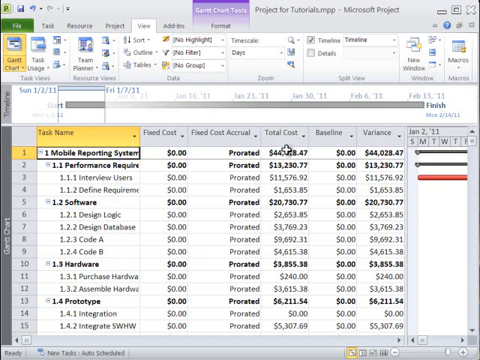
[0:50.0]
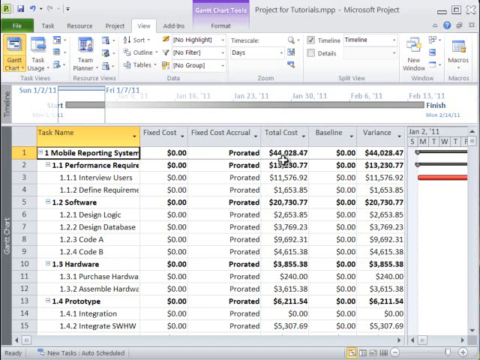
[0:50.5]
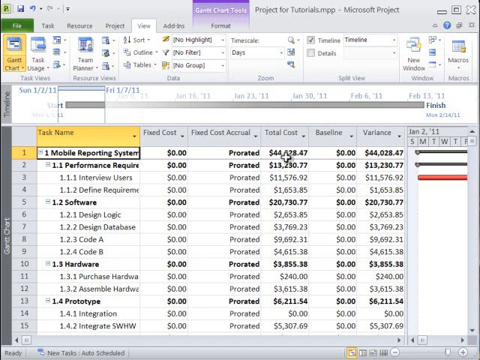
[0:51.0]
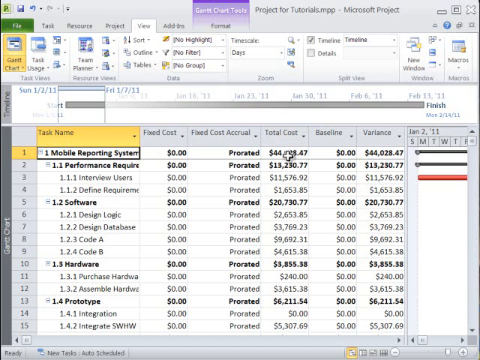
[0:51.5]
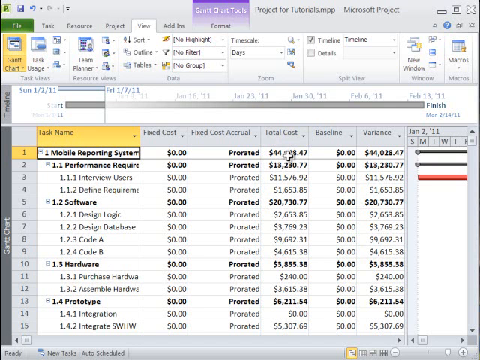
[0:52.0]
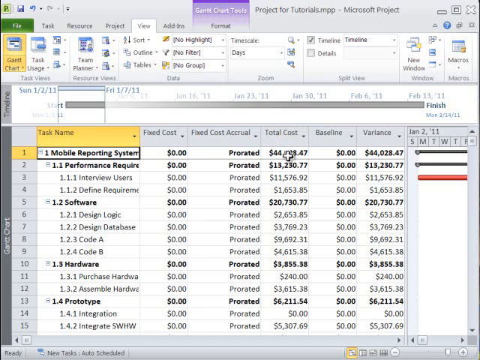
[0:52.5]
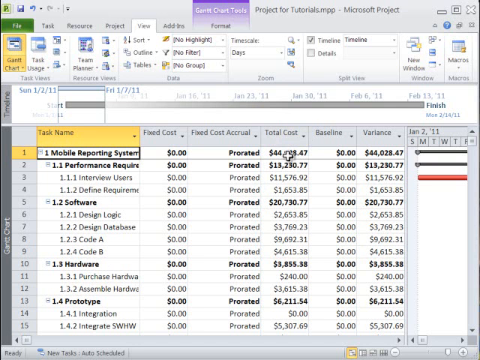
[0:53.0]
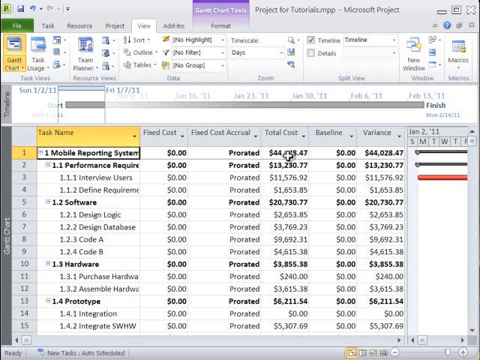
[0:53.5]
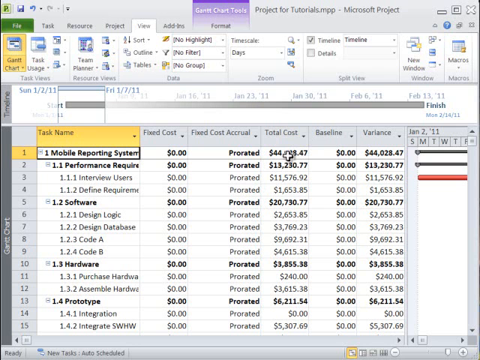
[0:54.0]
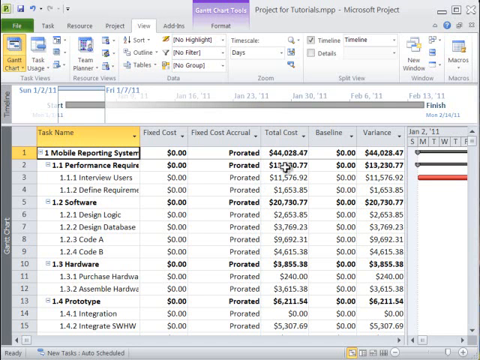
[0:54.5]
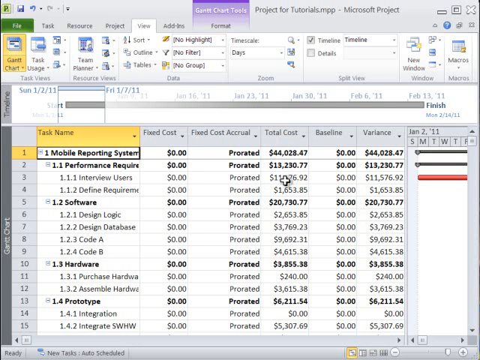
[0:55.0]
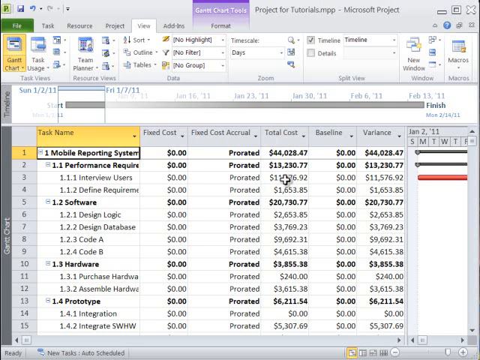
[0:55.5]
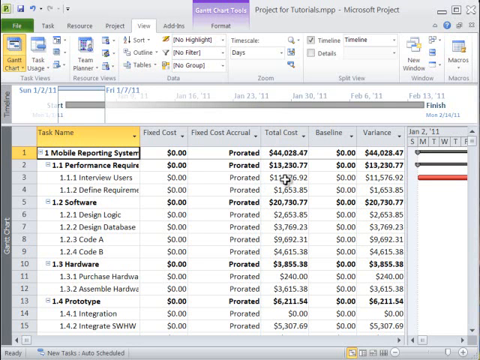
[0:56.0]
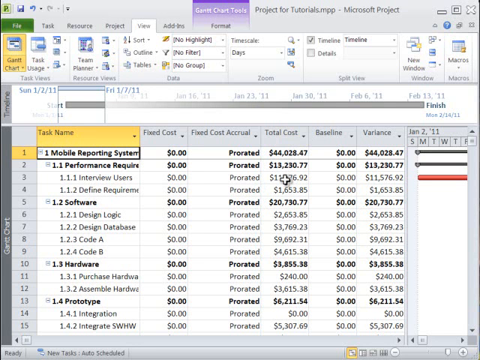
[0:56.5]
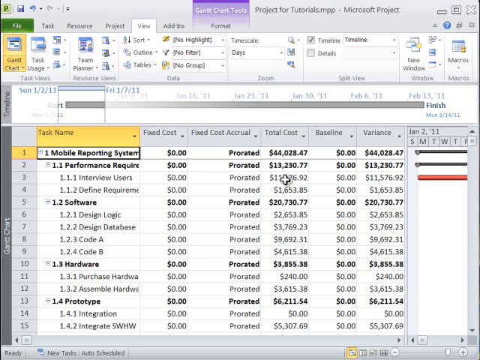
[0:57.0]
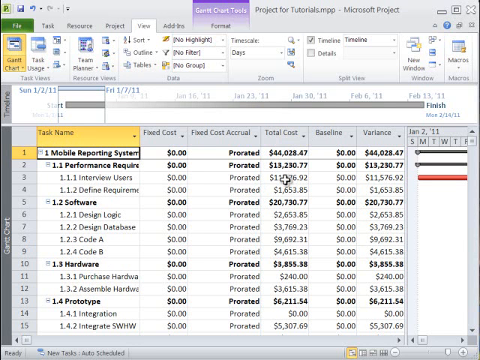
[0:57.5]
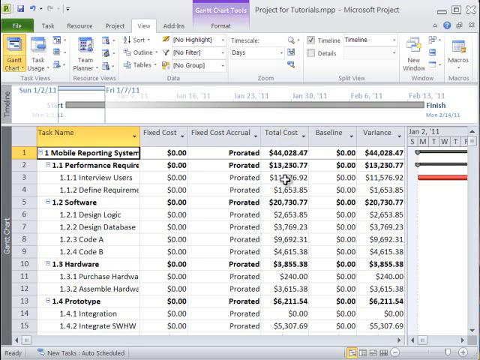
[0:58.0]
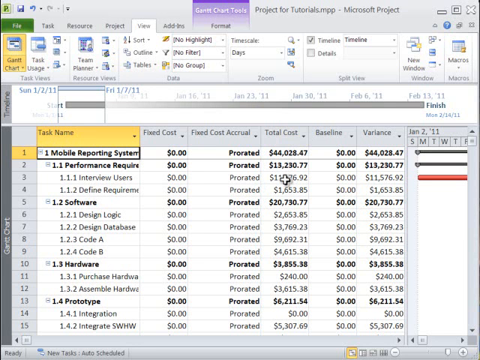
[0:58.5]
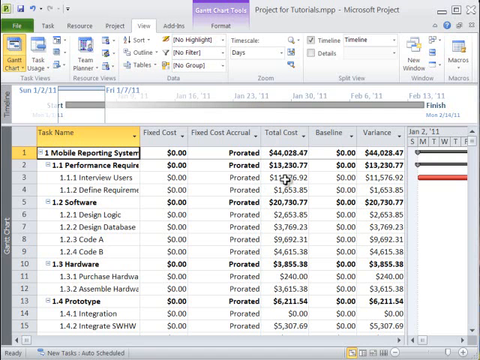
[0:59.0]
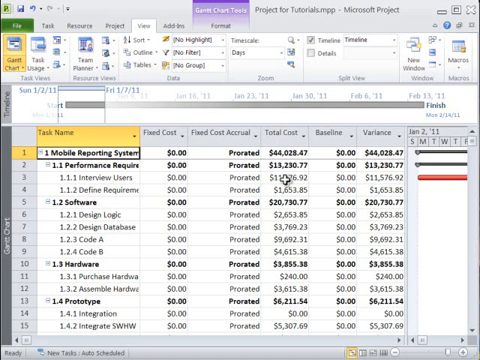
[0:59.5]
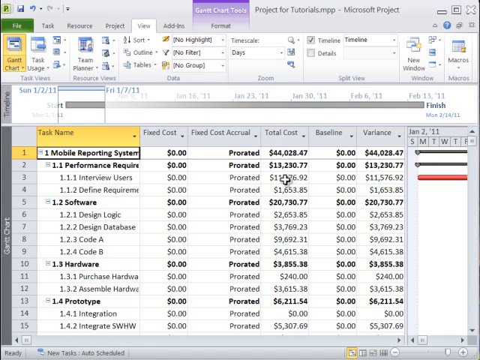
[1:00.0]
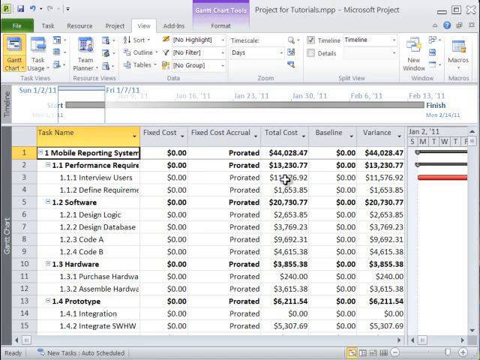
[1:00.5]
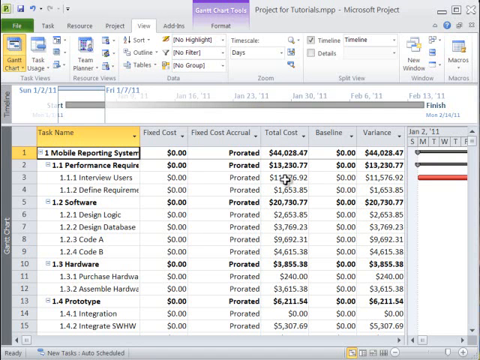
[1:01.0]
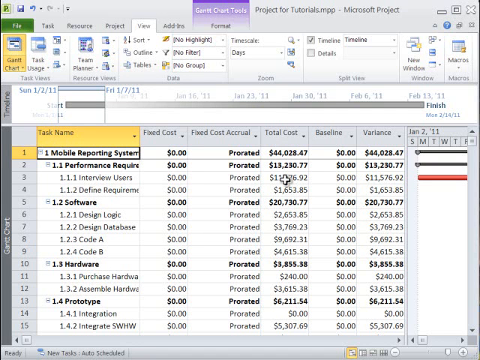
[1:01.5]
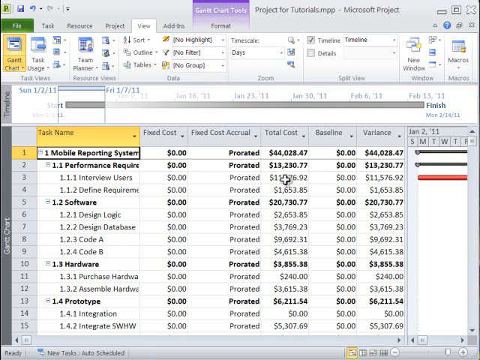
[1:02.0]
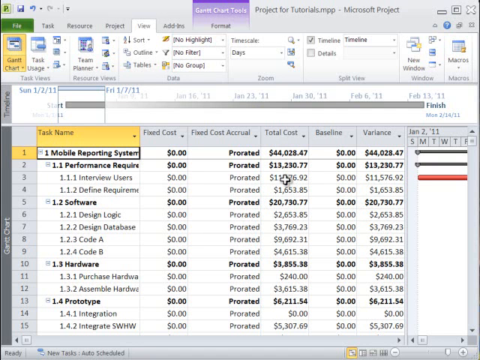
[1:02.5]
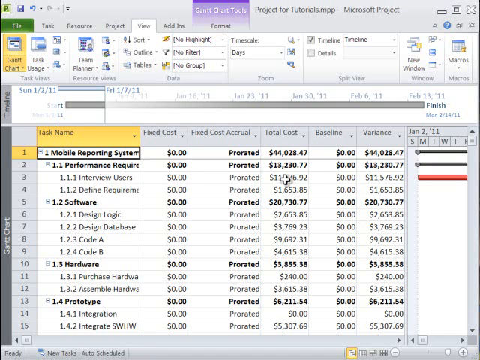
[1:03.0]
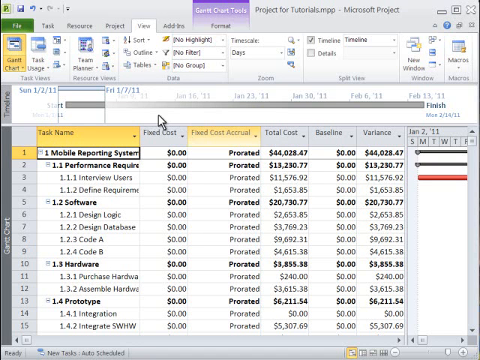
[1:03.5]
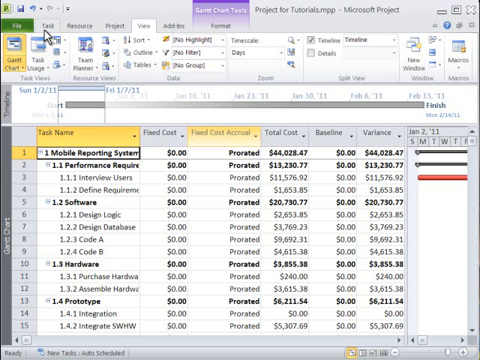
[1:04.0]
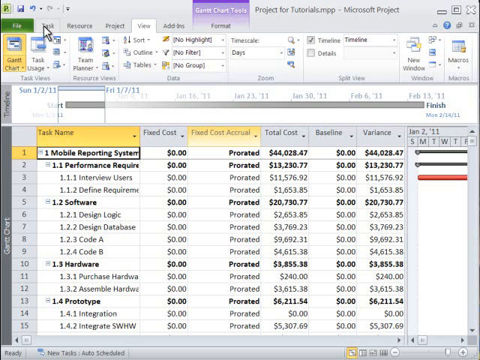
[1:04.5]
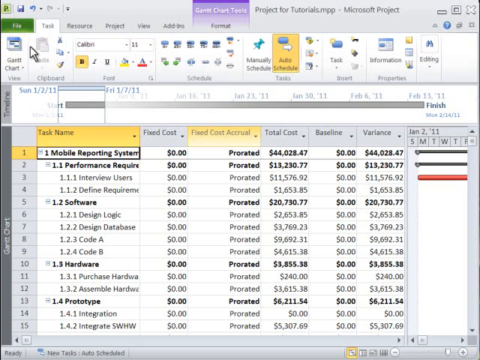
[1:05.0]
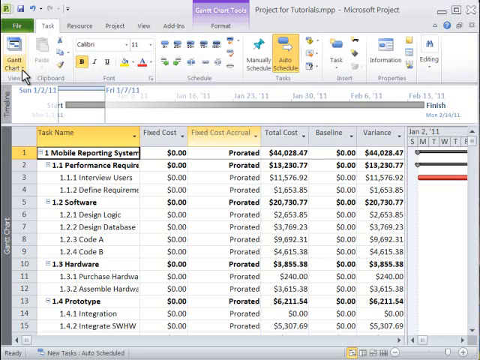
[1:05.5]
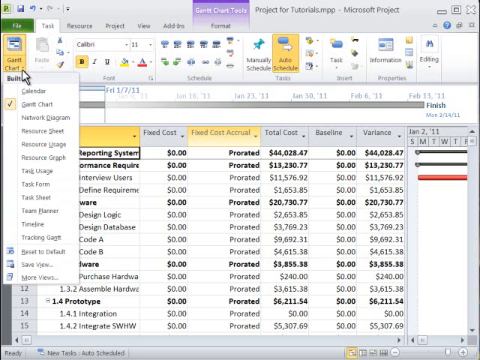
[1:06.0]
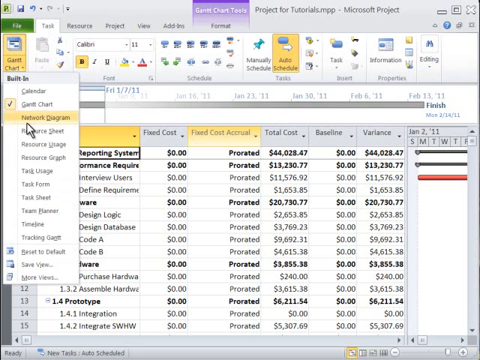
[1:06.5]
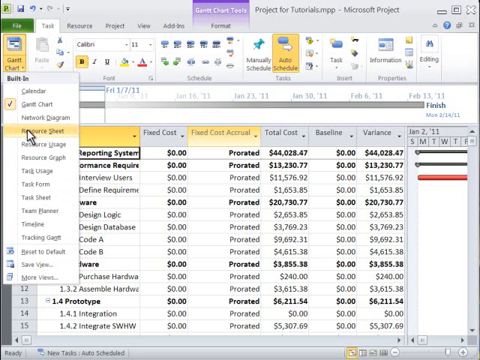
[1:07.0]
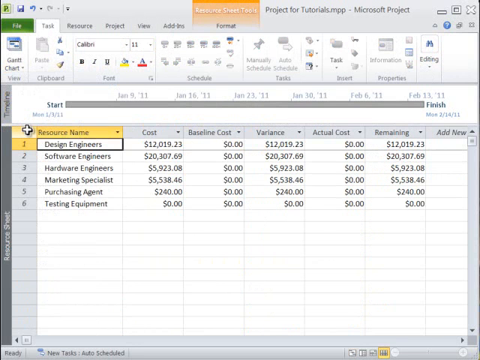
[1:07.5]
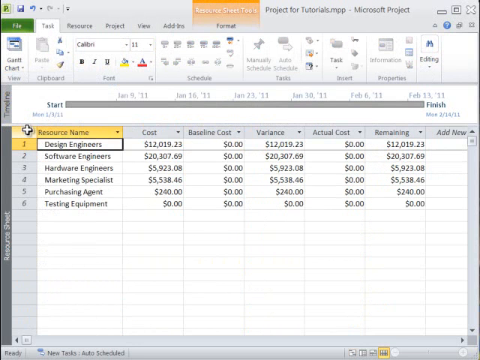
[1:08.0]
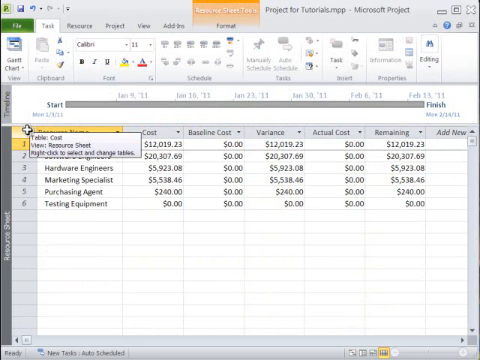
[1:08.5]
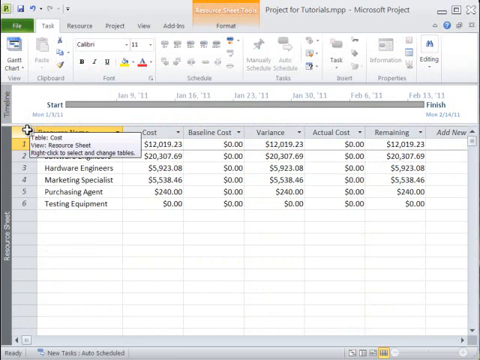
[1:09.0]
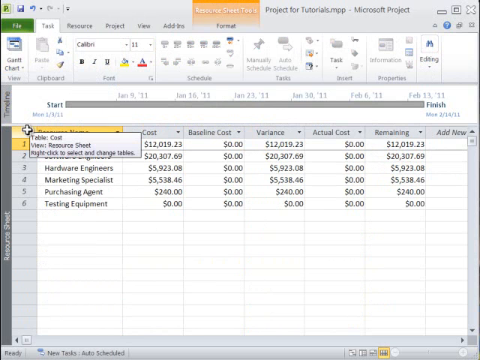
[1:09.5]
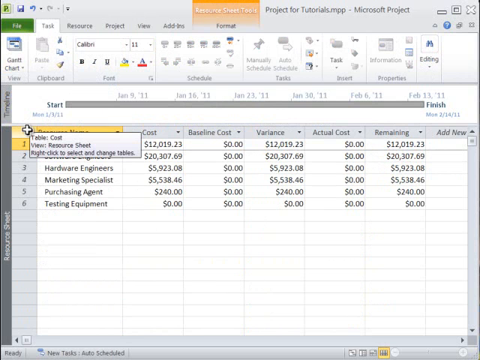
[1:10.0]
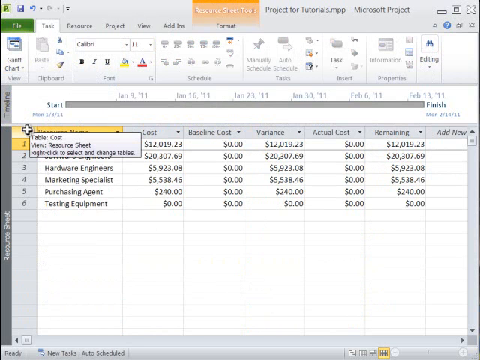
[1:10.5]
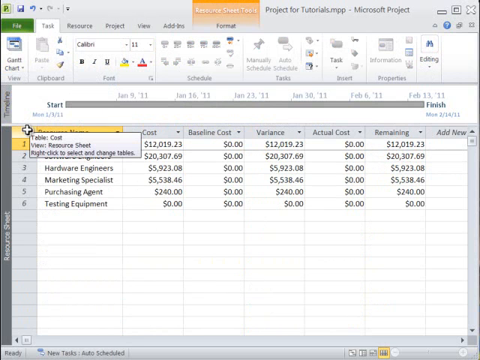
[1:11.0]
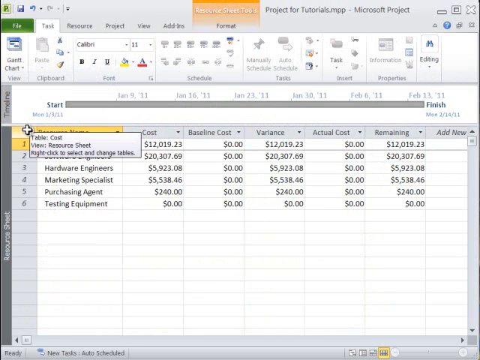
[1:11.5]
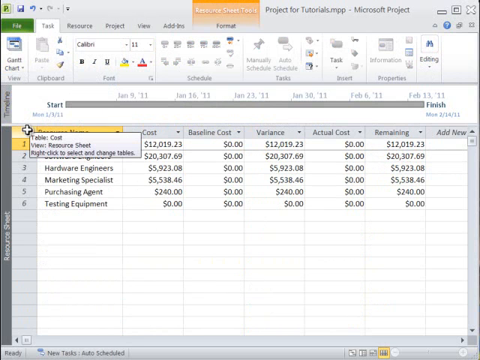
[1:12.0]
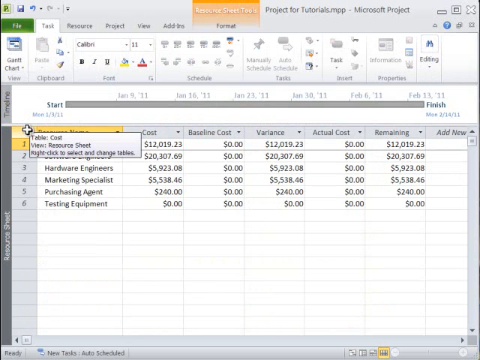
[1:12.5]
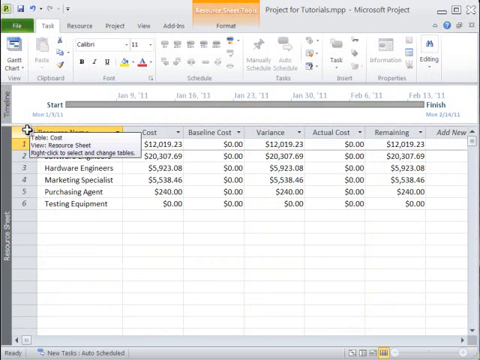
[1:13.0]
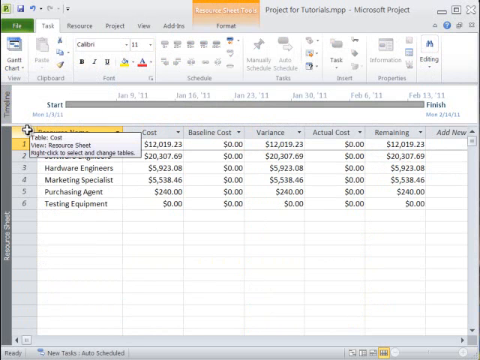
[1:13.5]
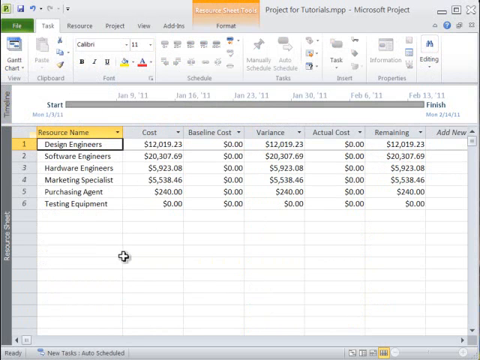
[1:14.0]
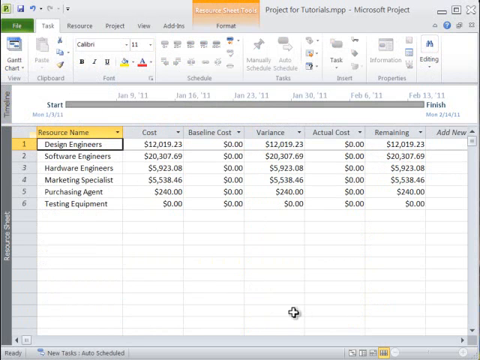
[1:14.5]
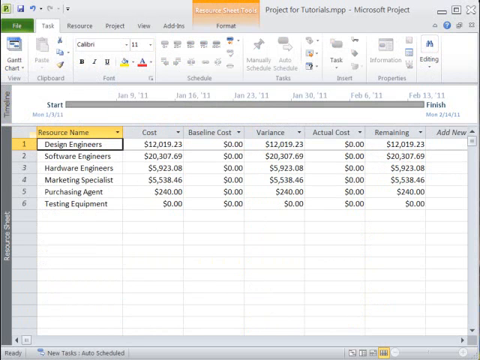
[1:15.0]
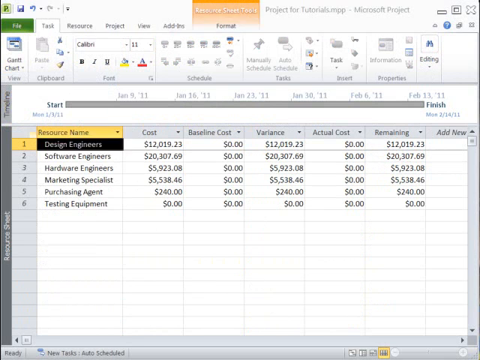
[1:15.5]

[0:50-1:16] The view moves through the columns a little. "Mobile reporting system" is visible. The view goes up to task, and the charts change as different charts are looked at. The data seems to be broken down by different categories, possibly people or testing equipment, and it looks like it is broken down by person. Task name is selected. There are many columns and many different parameters that can be sorted, and the data looks like it is from 2011.